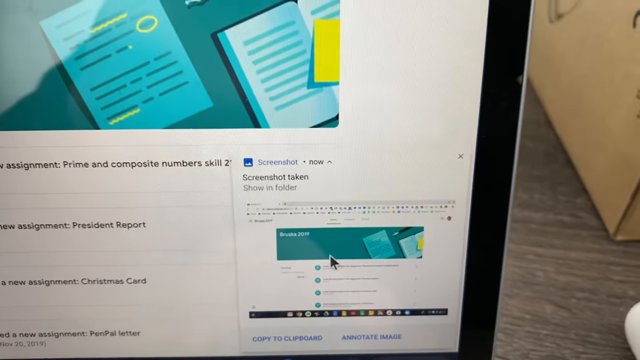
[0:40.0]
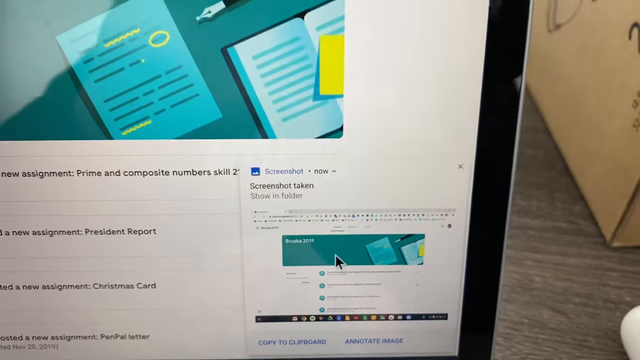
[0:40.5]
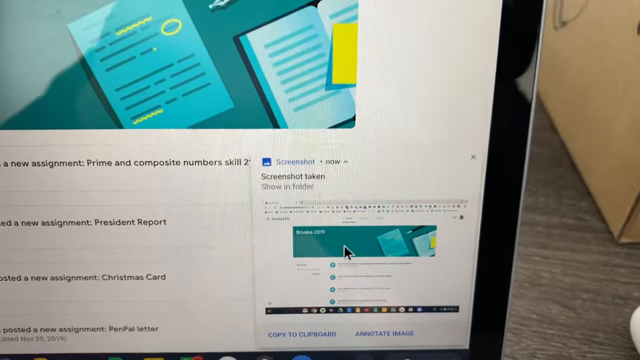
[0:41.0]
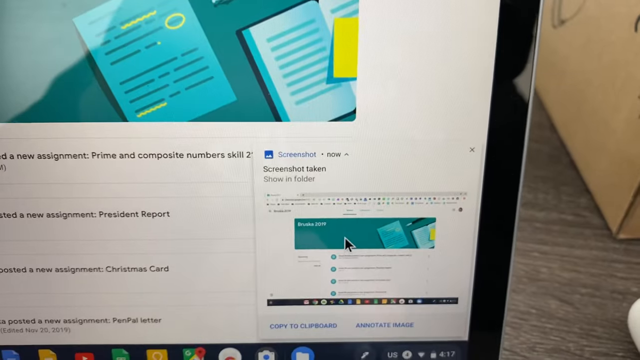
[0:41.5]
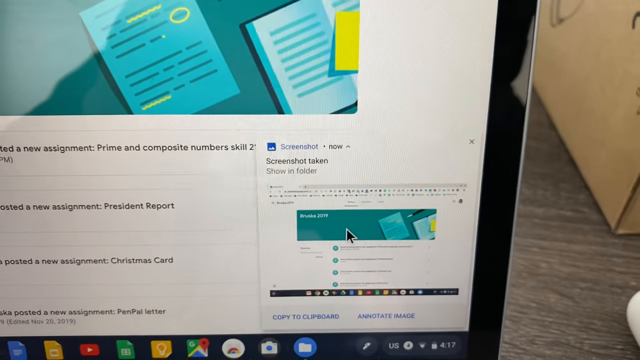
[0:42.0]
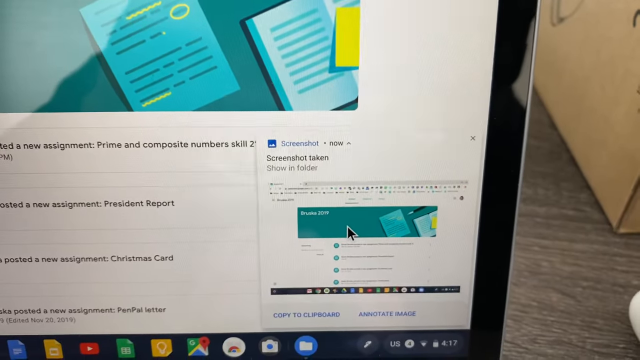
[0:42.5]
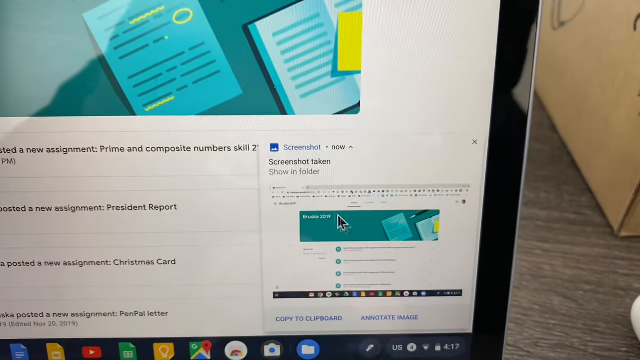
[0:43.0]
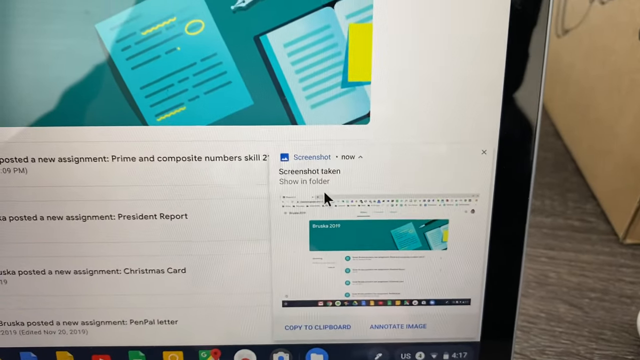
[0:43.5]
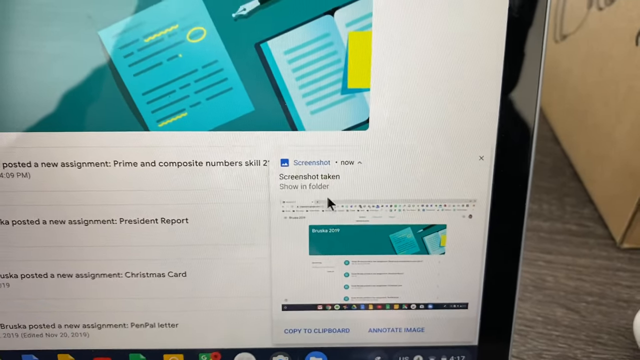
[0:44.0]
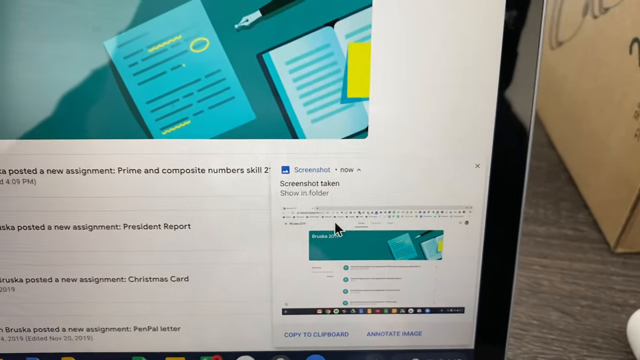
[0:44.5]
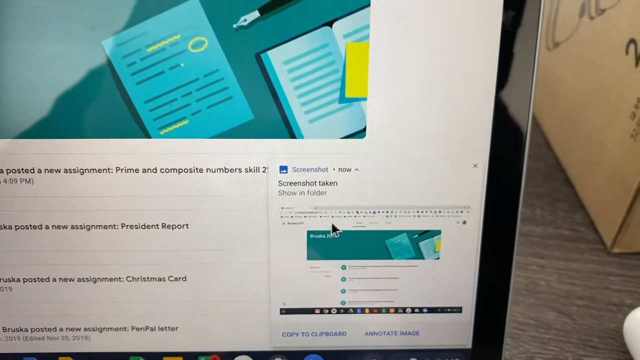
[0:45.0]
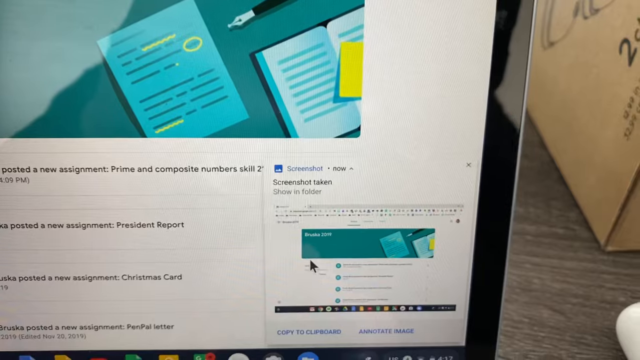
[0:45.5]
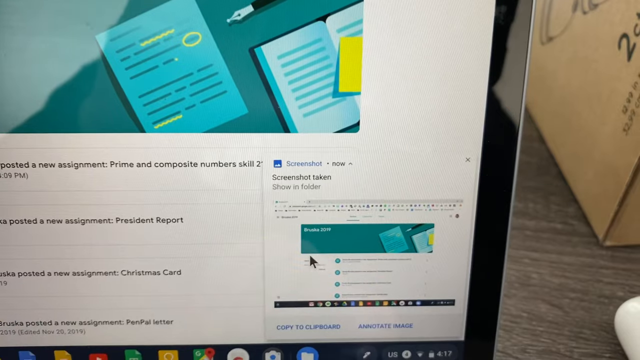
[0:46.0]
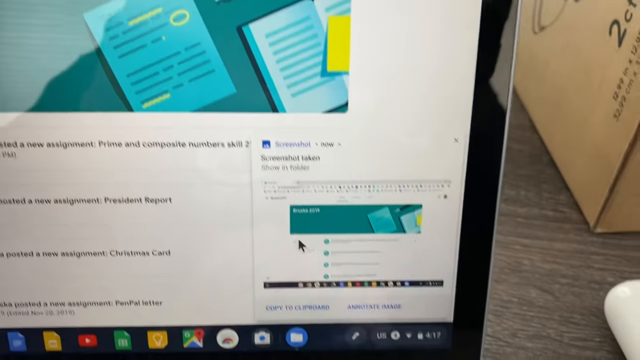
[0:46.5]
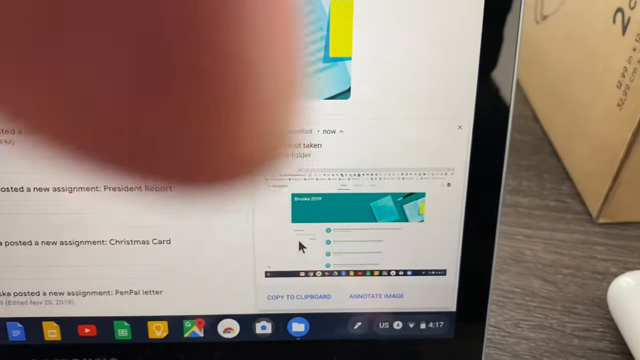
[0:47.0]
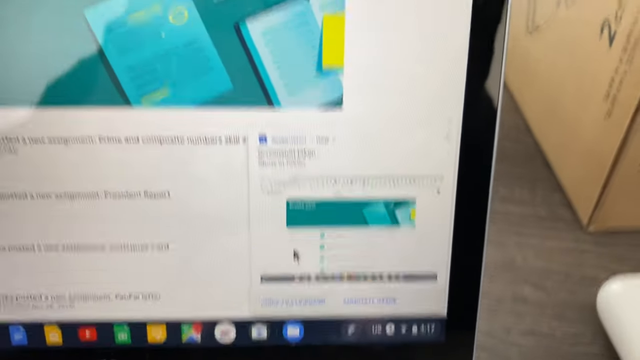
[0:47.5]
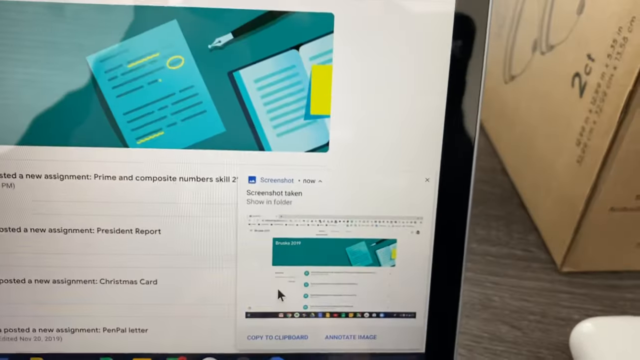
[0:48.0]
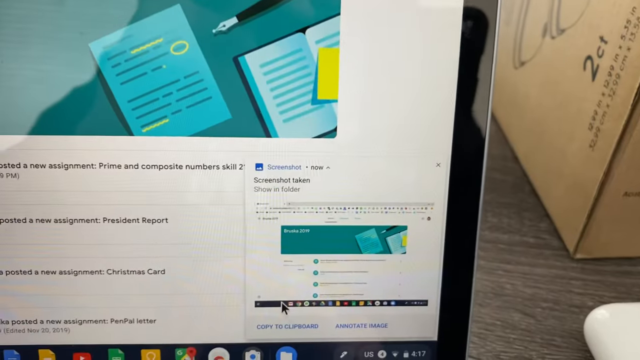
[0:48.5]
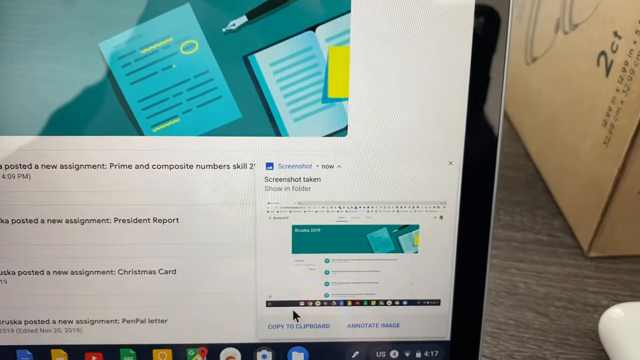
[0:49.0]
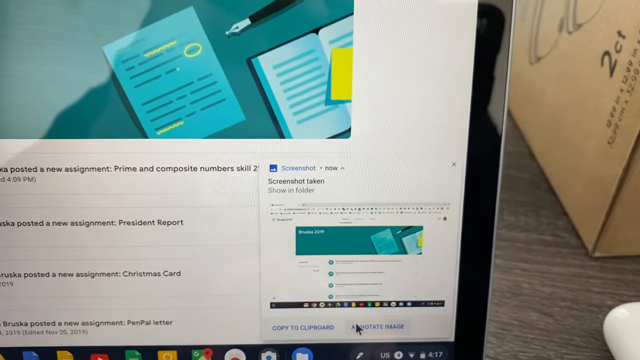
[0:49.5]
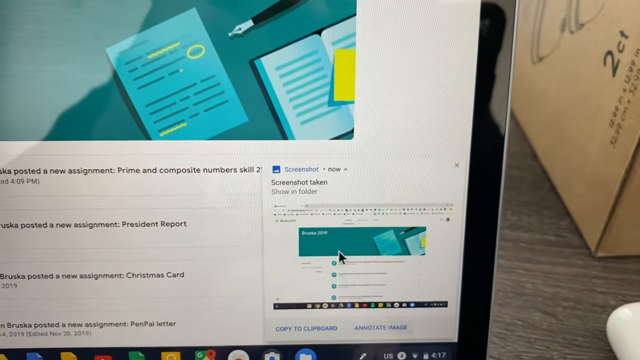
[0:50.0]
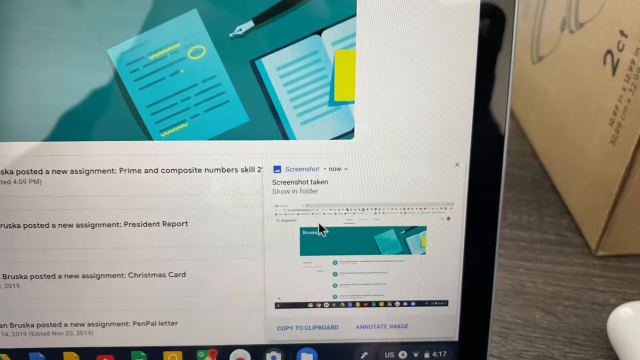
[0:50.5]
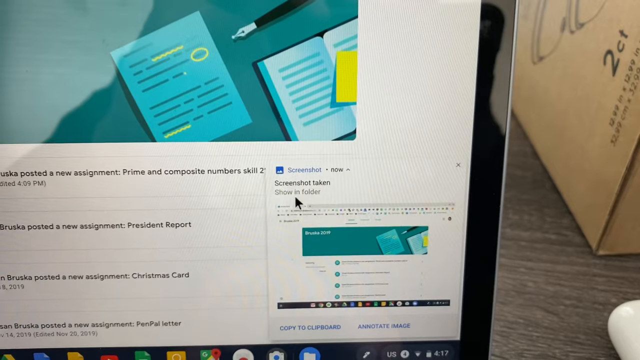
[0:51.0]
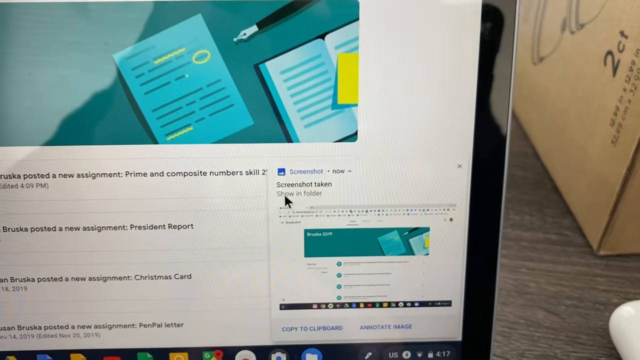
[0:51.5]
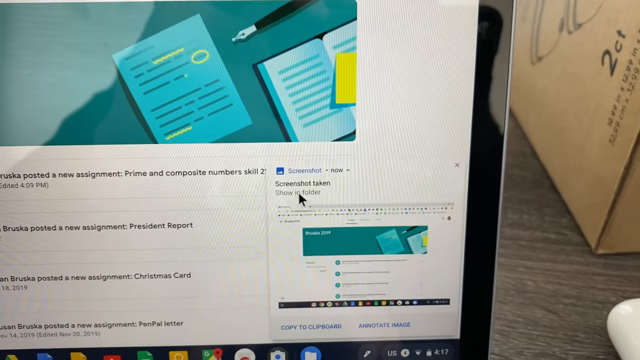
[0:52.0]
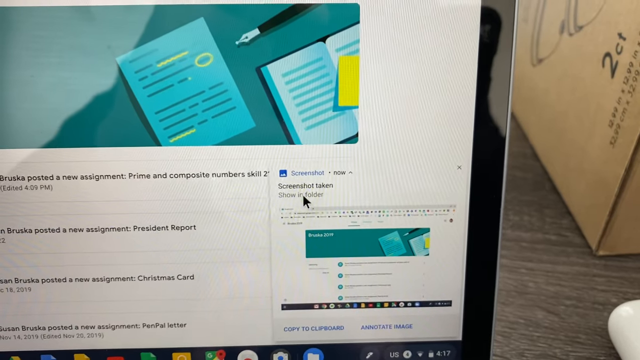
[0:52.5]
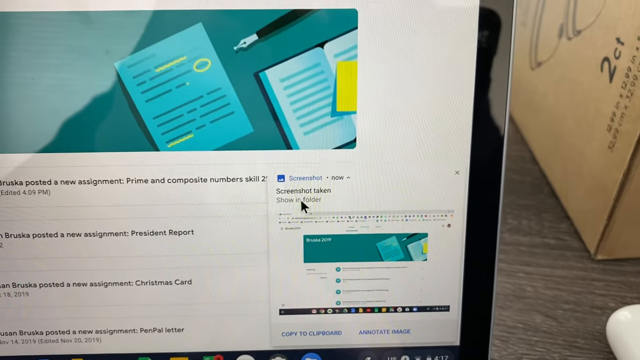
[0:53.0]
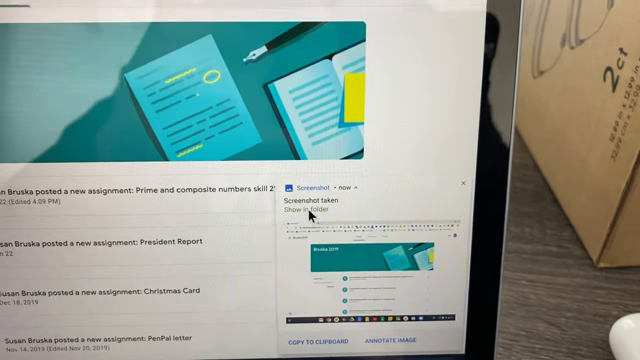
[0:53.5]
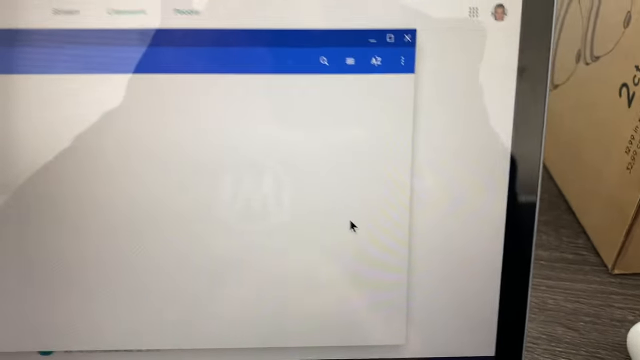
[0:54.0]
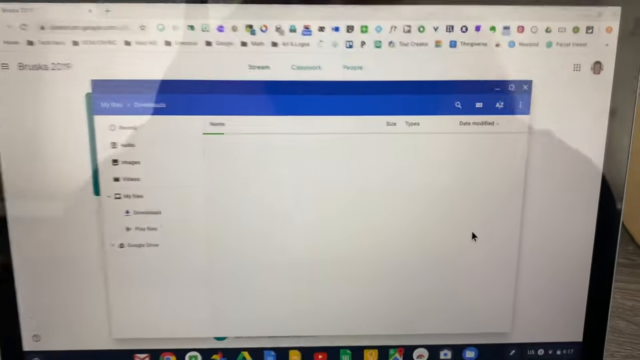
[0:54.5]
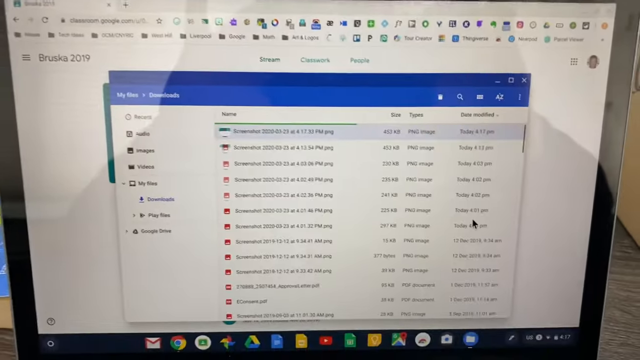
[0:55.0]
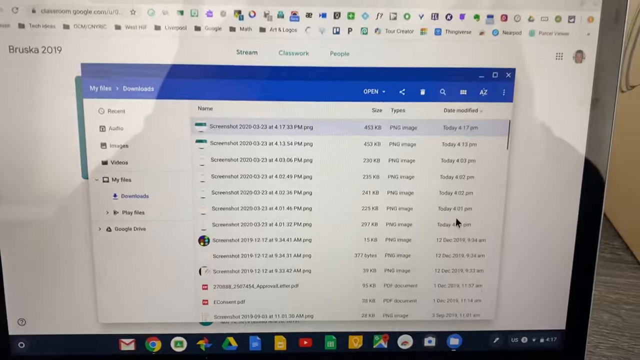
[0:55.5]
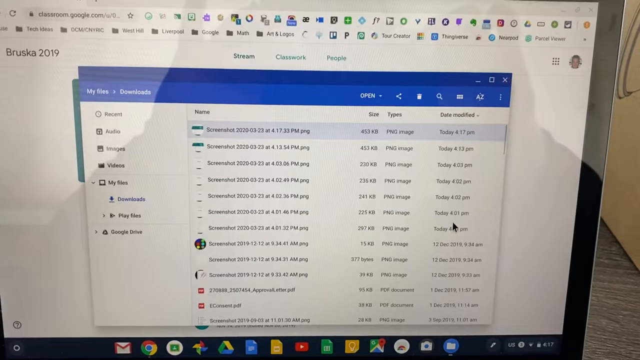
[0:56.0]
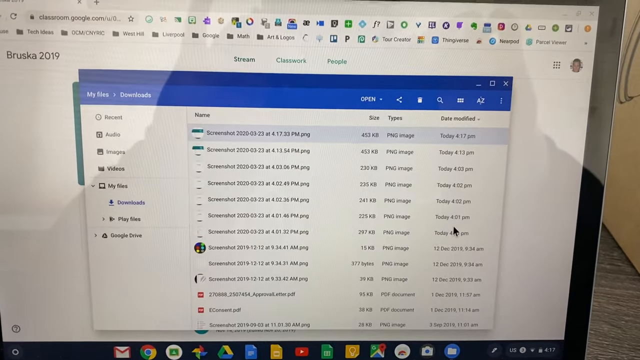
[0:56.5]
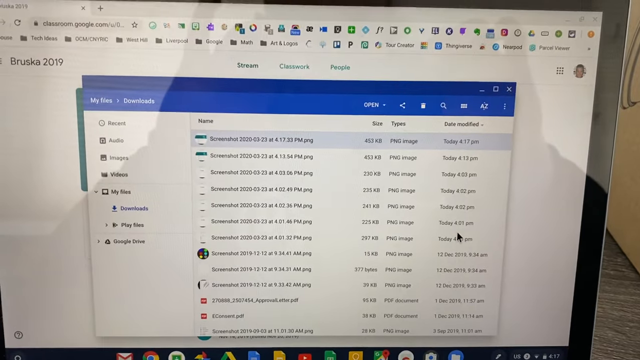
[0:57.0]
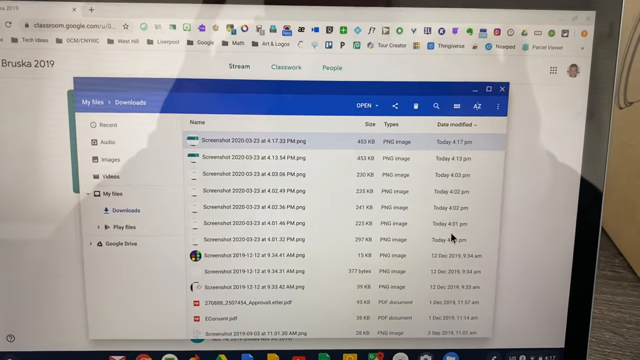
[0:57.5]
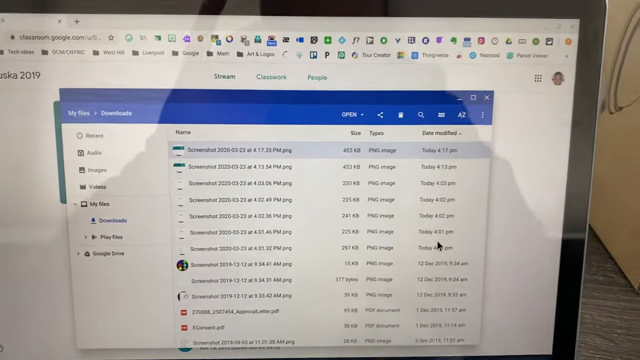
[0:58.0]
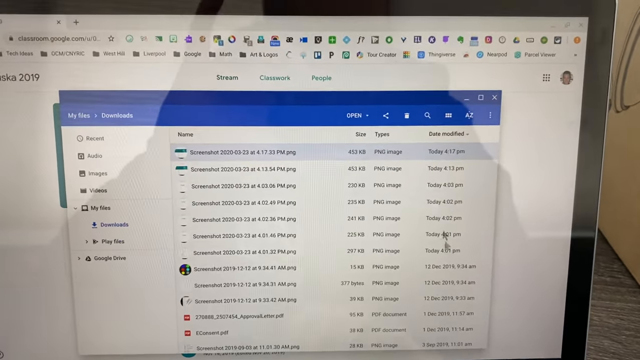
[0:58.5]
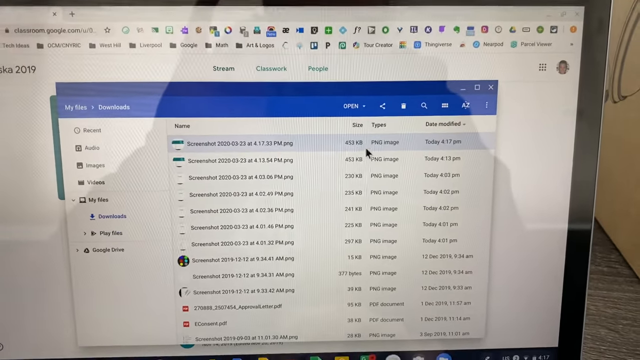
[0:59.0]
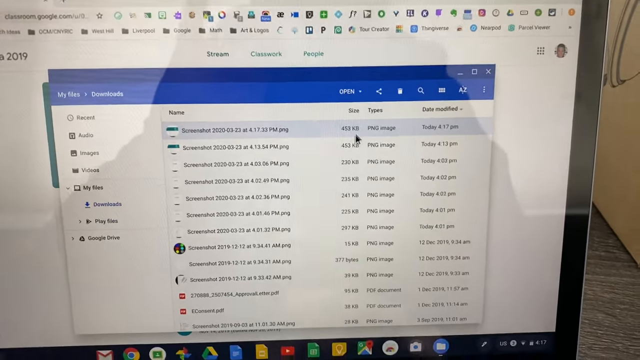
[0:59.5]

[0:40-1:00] The cursor moves around the area of the screenshot, and a finger points to it, closer to the camera rather than touching the screen. A menu is clicked open and "show in folder" is selected. A window opens showing a bunch of folders, and a finger points to one of the folders, where the screenshot that was just taken is saved.